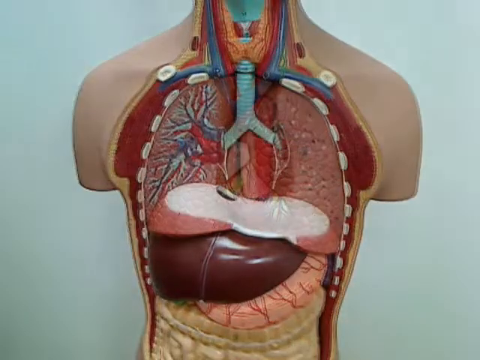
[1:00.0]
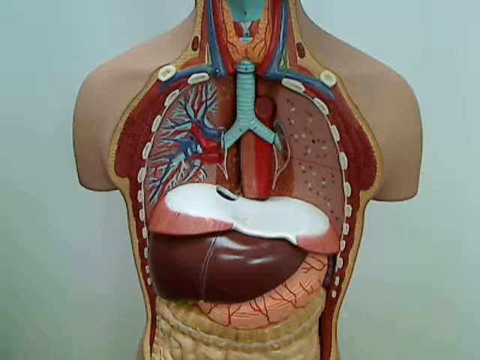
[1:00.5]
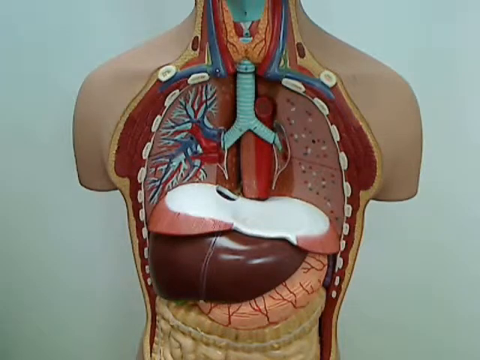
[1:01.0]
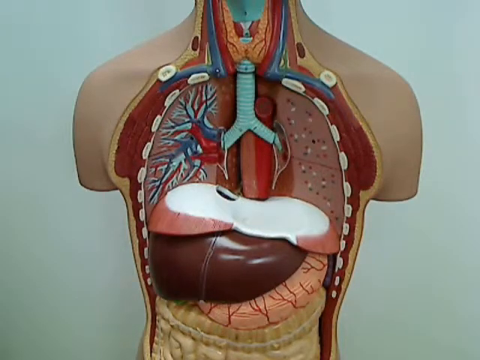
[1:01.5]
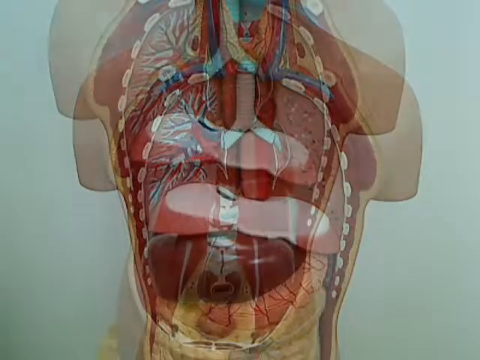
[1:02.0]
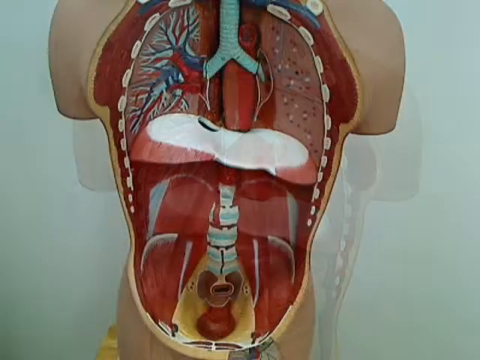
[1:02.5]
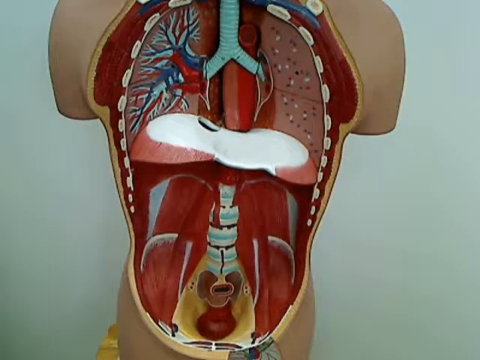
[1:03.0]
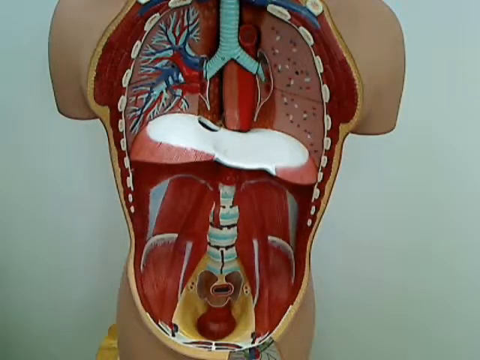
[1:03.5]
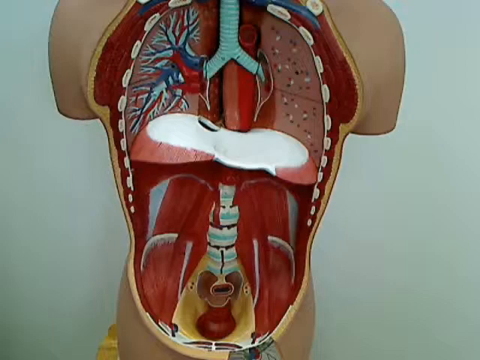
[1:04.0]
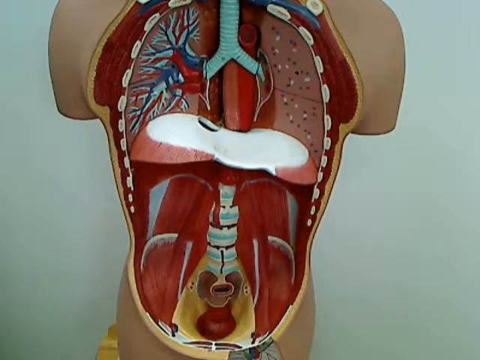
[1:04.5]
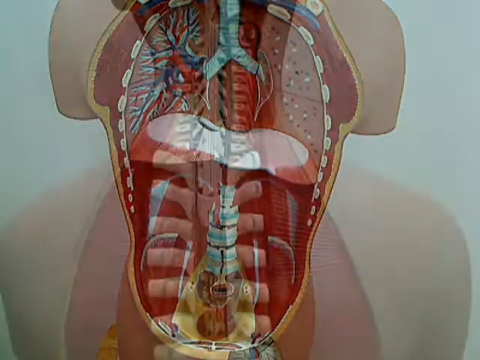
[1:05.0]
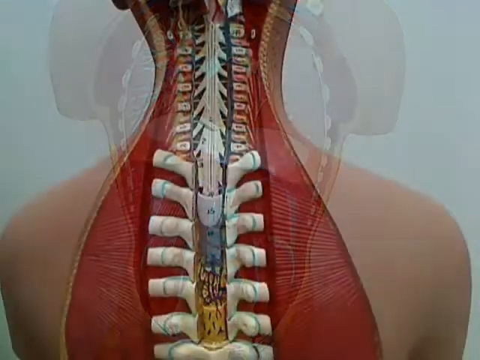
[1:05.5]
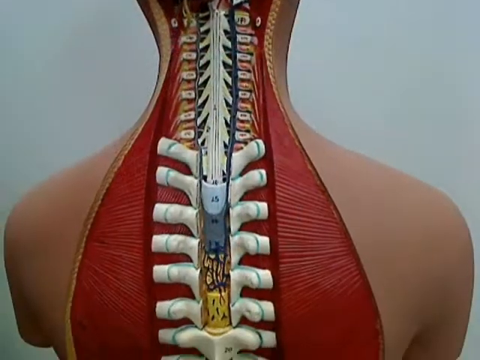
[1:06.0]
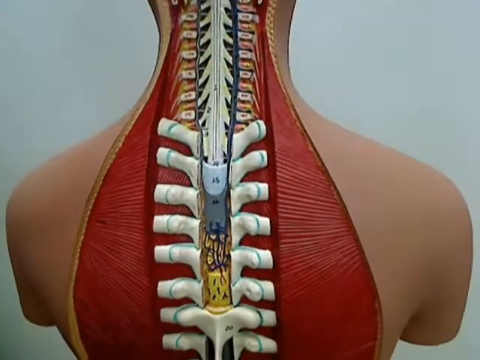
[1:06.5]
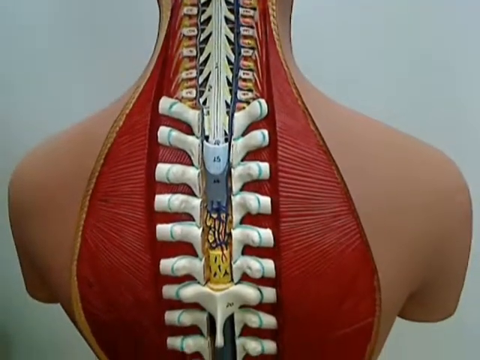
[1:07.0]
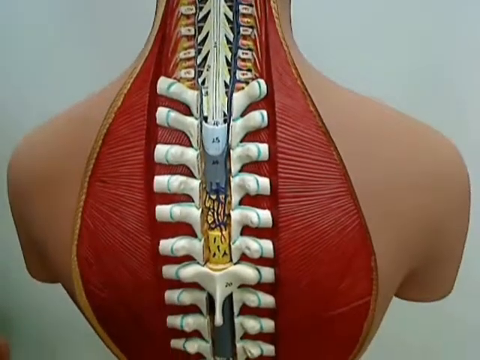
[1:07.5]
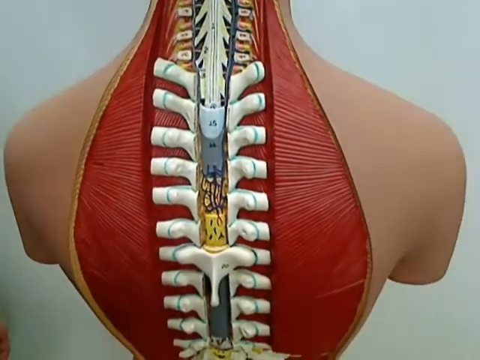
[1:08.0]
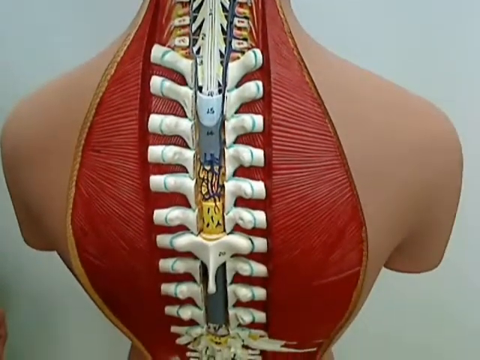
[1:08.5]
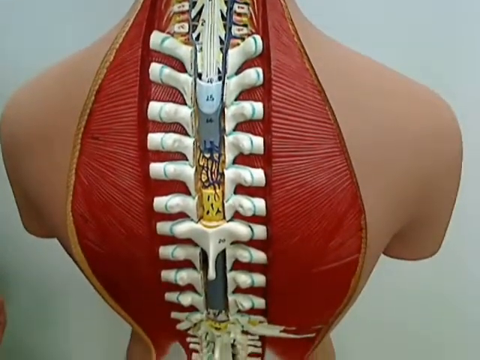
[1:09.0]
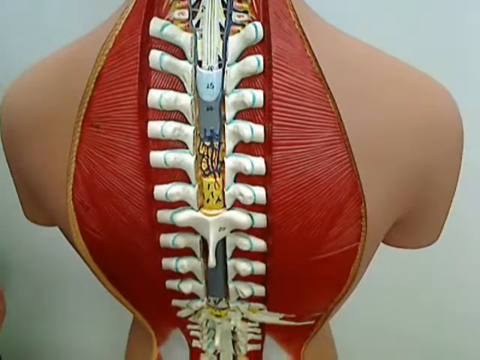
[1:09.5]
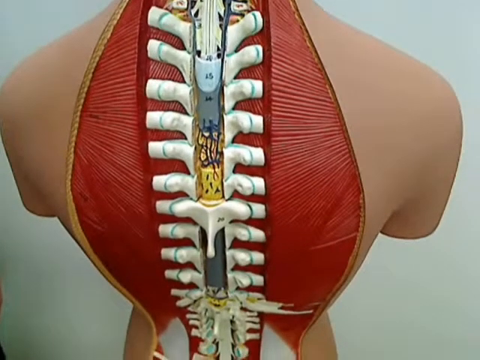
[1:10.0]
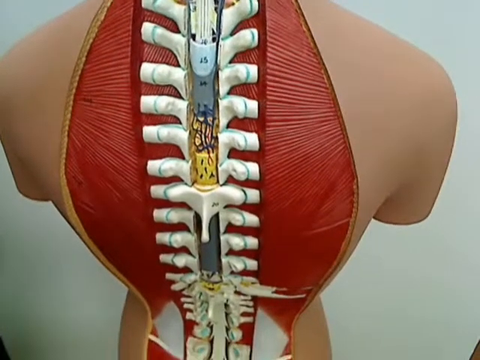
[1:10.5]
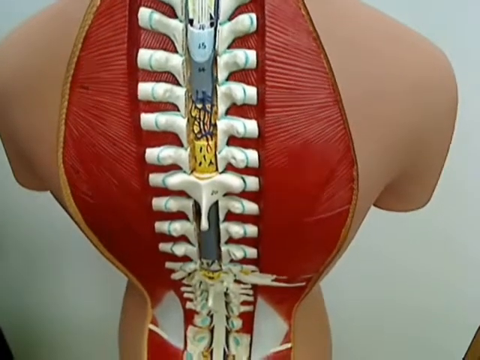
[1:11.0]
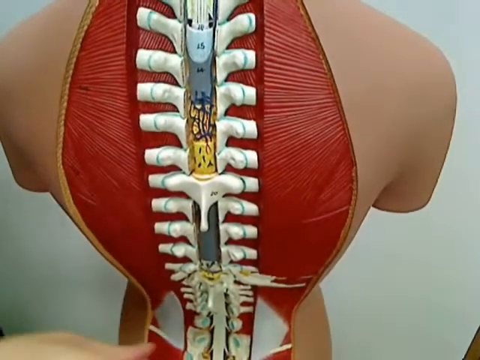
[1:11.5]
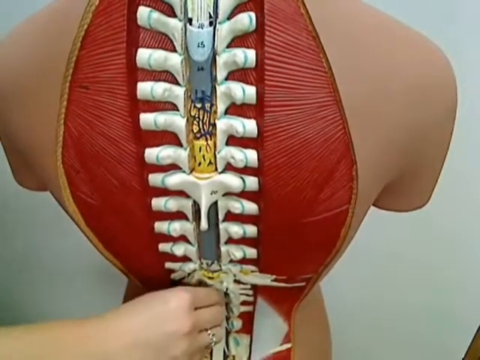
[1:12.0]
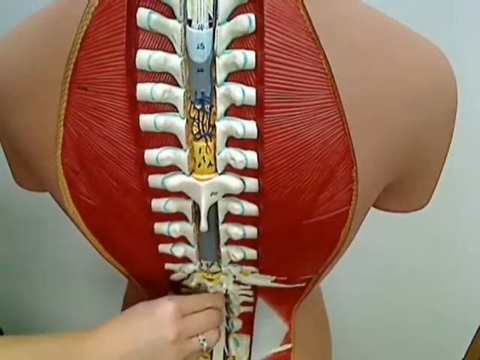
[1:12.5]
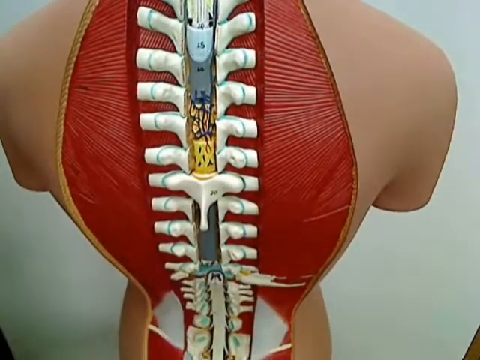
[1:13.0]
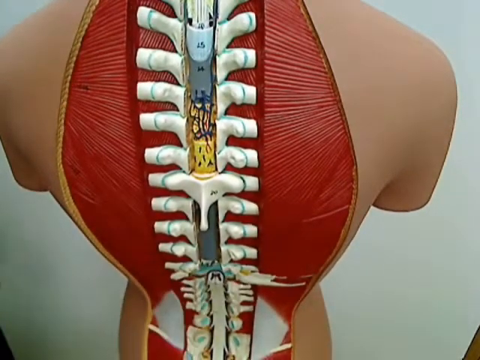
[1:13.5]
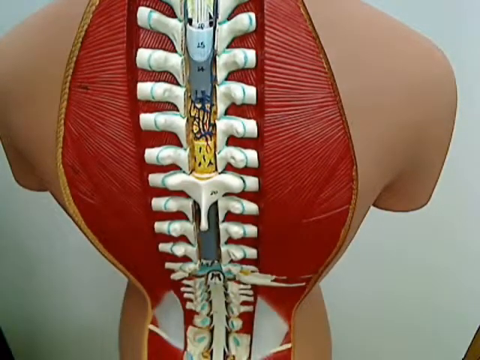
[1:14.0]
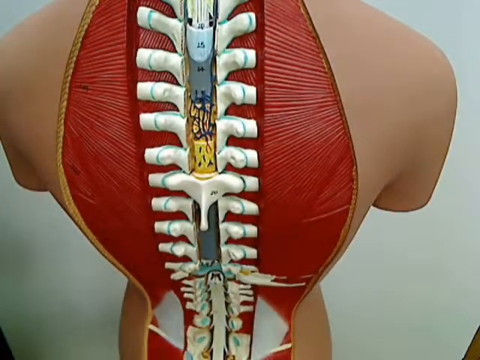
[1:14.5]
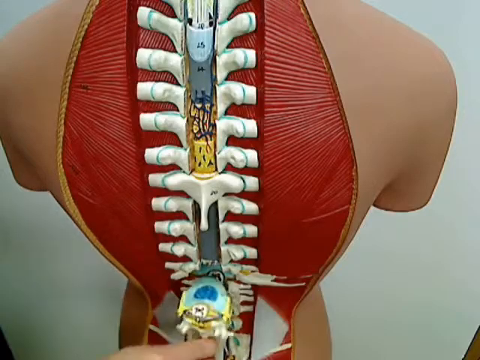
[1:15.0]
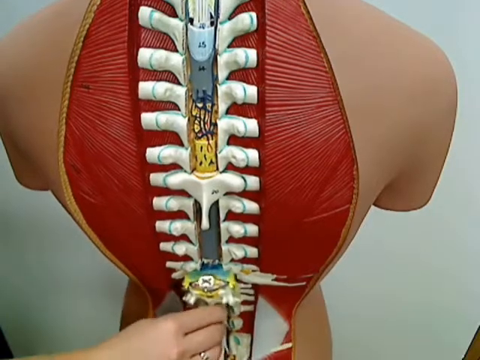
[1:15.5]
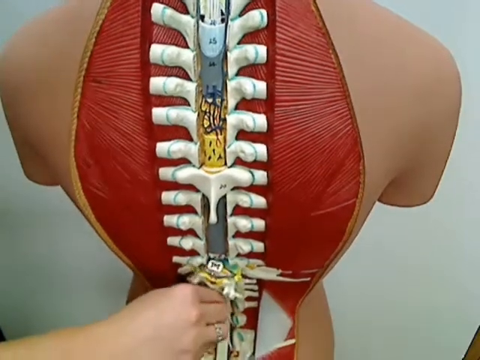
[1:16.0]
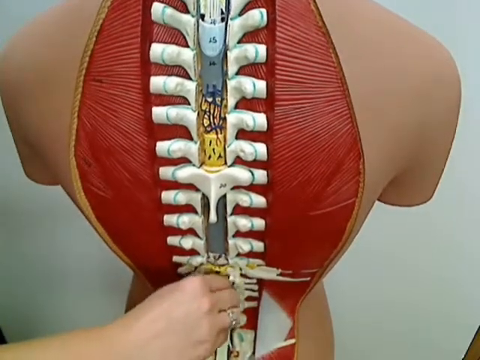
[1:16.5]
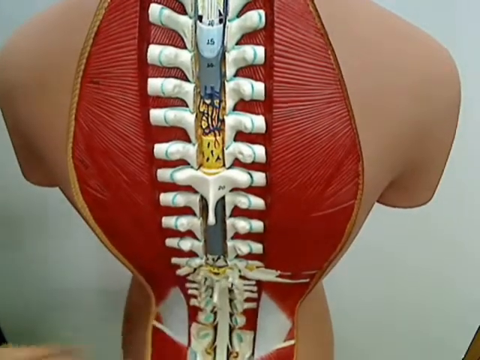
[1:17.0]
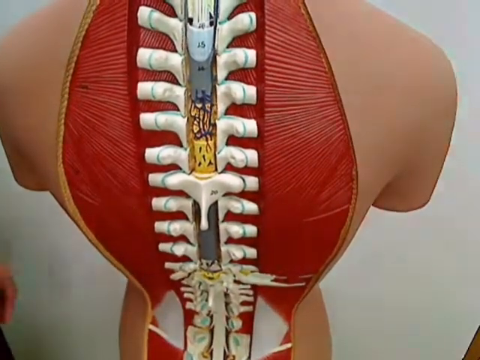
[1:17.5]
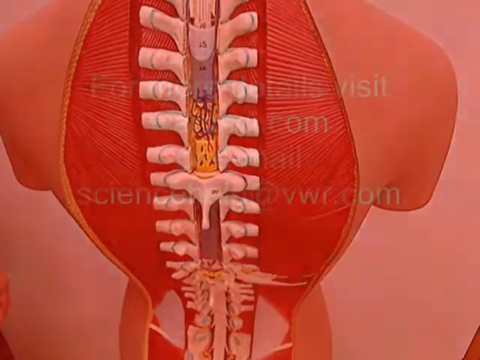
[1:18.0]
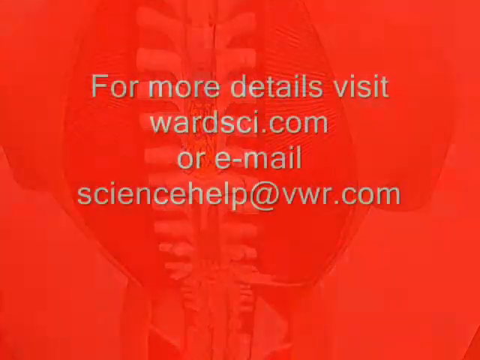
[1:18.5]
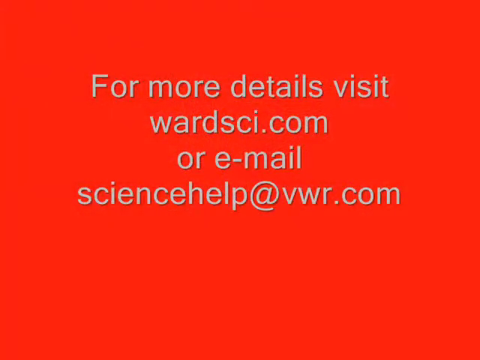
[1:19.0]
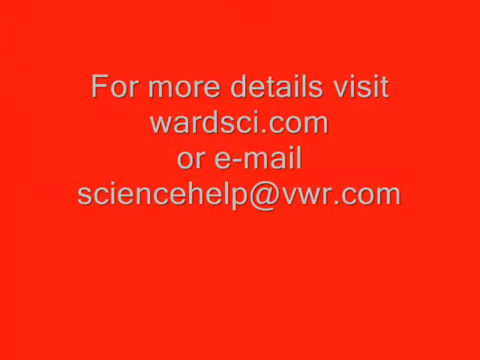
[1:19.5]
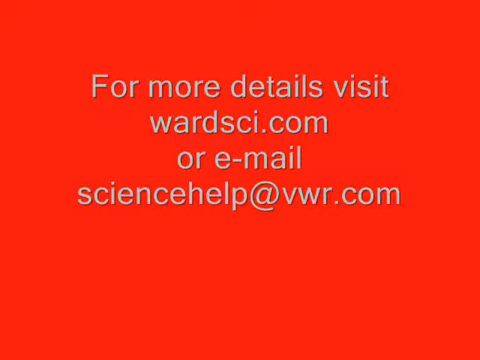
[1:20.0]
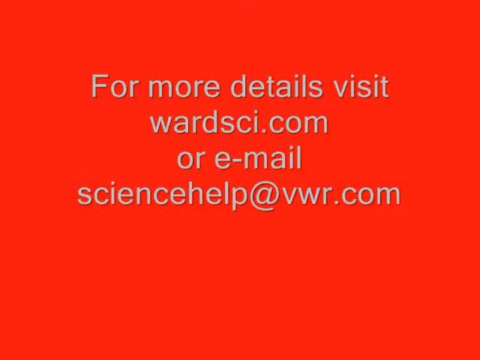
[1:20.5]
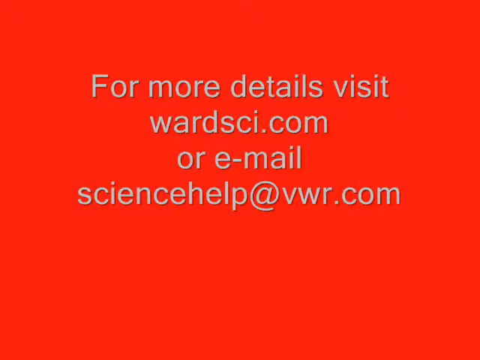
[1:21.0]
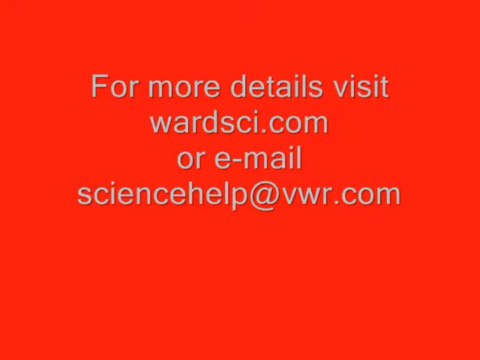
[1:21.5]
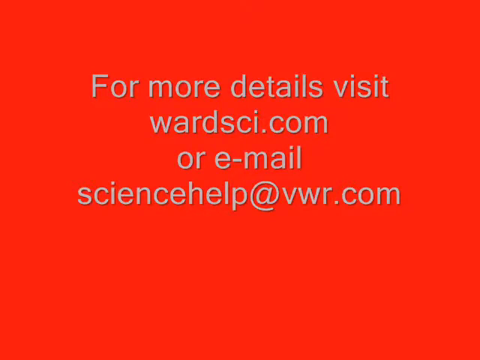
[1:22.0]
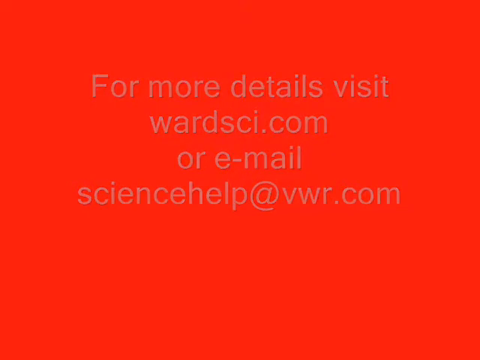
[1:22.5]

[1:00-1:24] The inside of the mannequin's torso is visible. The bones, including the rib cage, seem not to be visible, and the outside of the lungs has been removed to show the inside, along with the artery dispersion from the heart to the lungs and back. The view then transitions to the muscles and the spinal cord behind the abdominal organs; the removal of the organs itself is not shown, only that the organs can be removed. The muscle tissue of the back is seen through the front of the mannequin, along with the spinal cord and where it attaches to the hips. The mannequin is then shown from the back, exposing the spinal cord and all of its attachments to the rib cage, specifically showing the upper back and most of the neck.